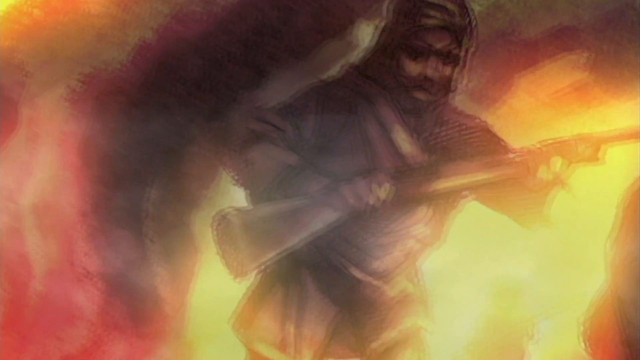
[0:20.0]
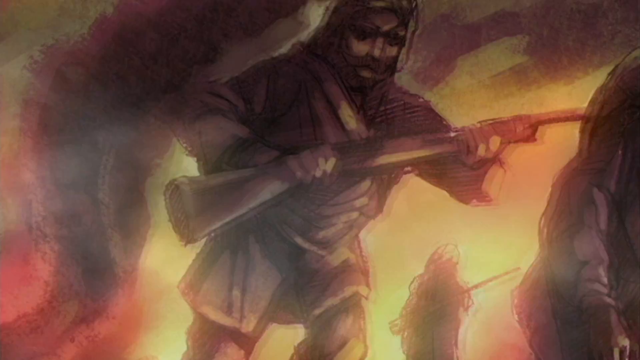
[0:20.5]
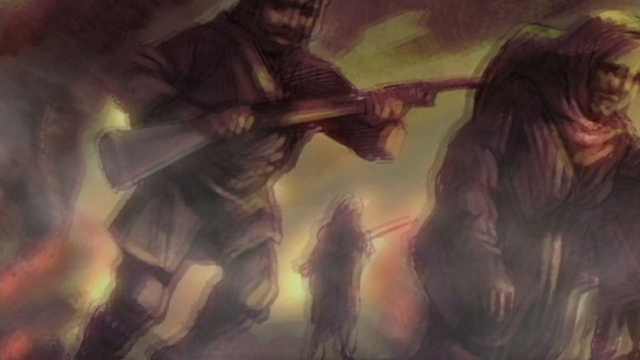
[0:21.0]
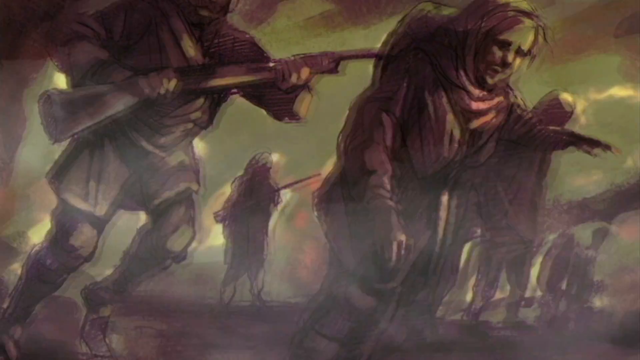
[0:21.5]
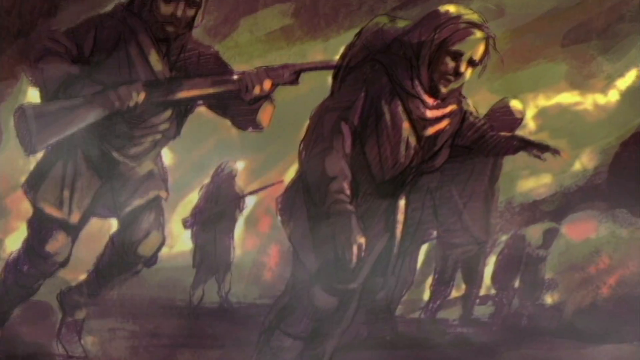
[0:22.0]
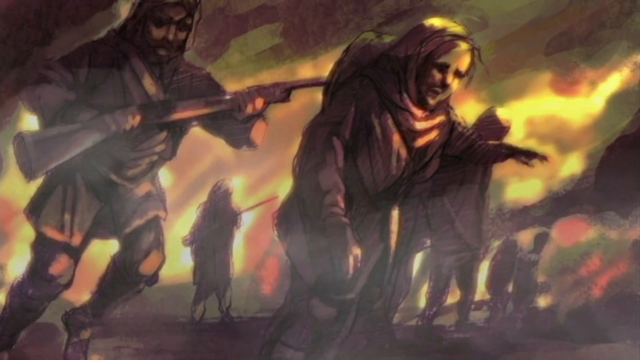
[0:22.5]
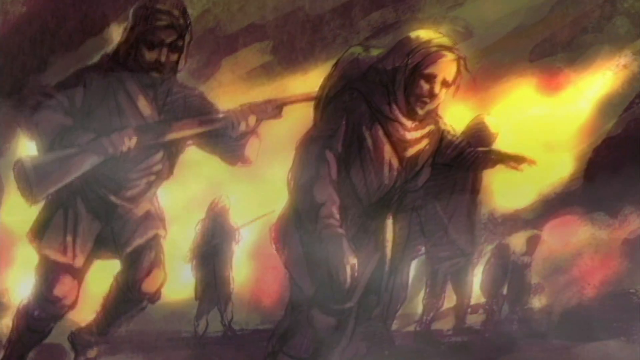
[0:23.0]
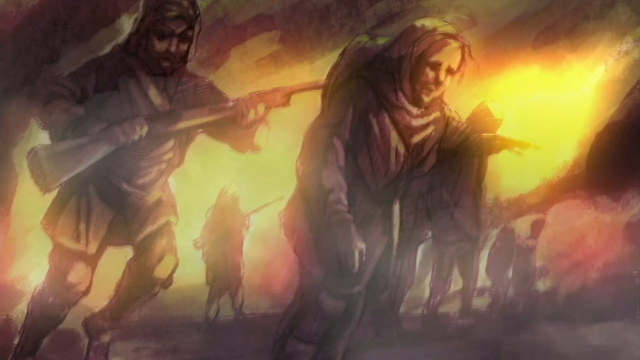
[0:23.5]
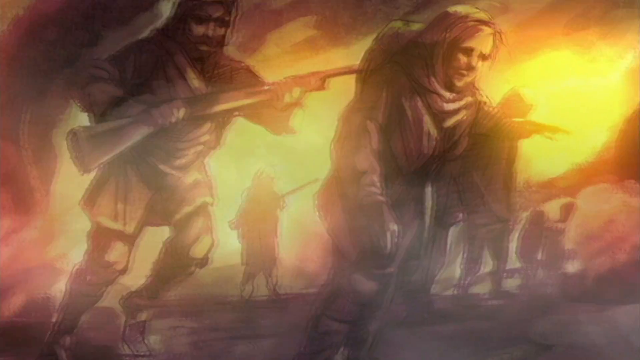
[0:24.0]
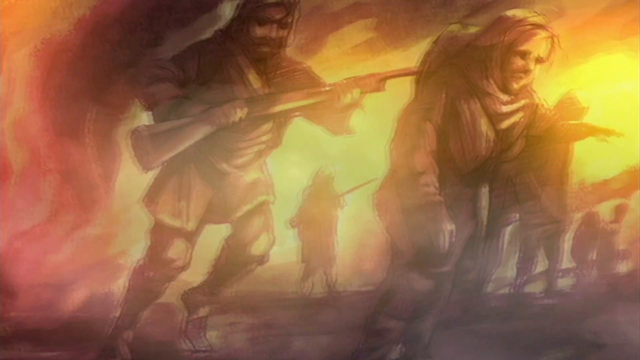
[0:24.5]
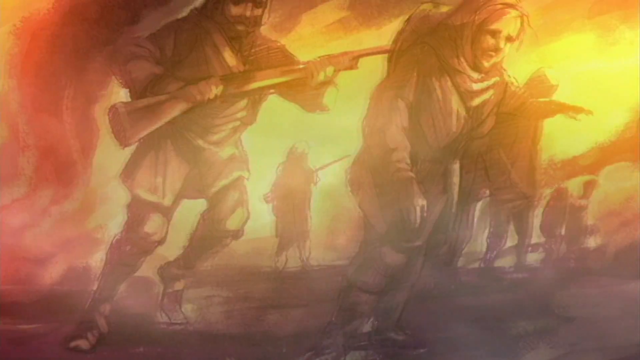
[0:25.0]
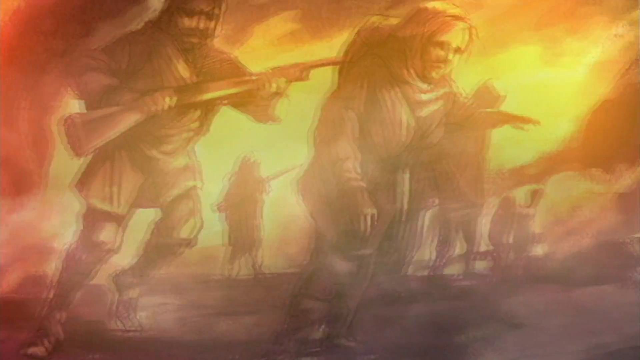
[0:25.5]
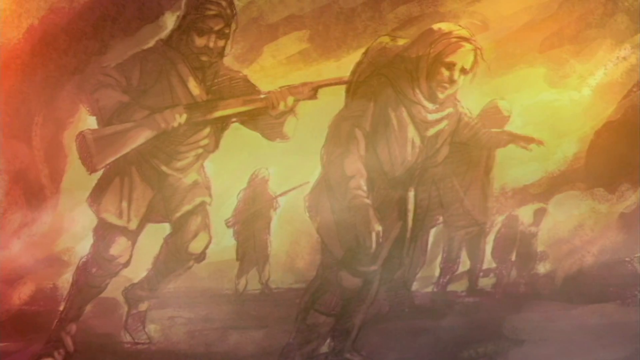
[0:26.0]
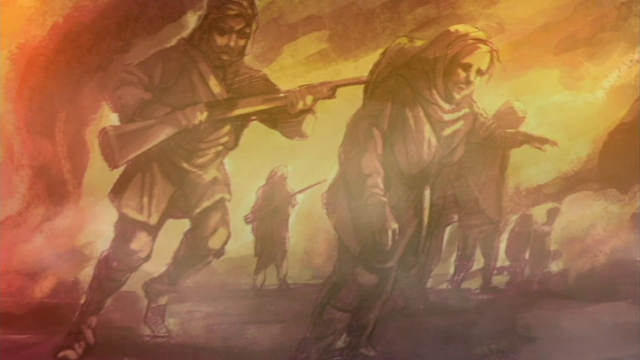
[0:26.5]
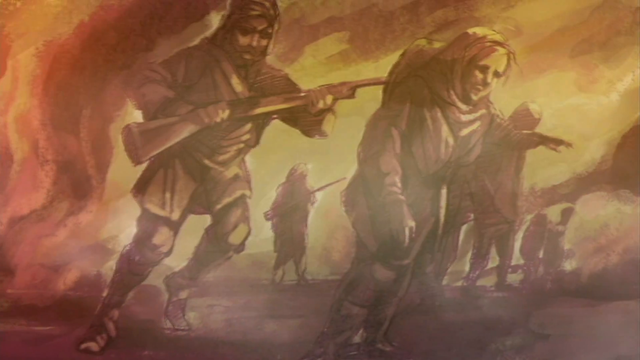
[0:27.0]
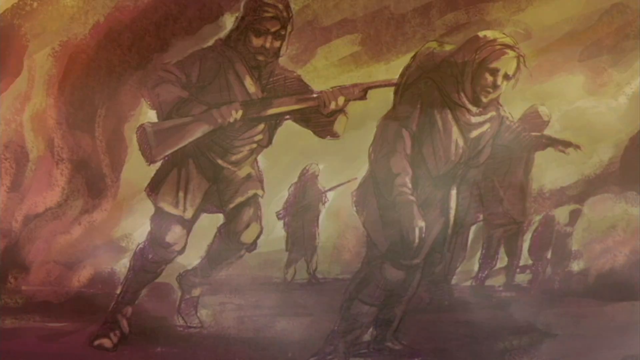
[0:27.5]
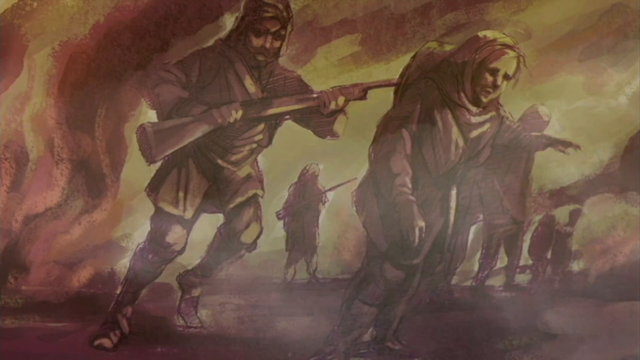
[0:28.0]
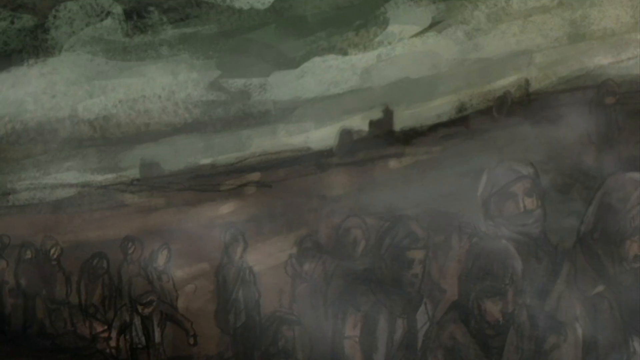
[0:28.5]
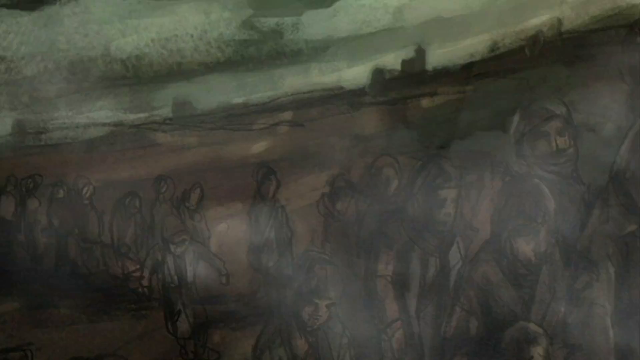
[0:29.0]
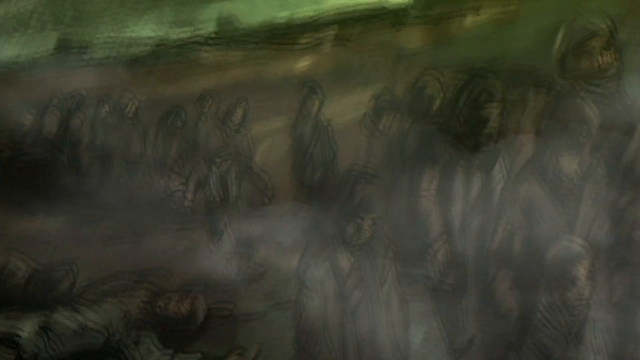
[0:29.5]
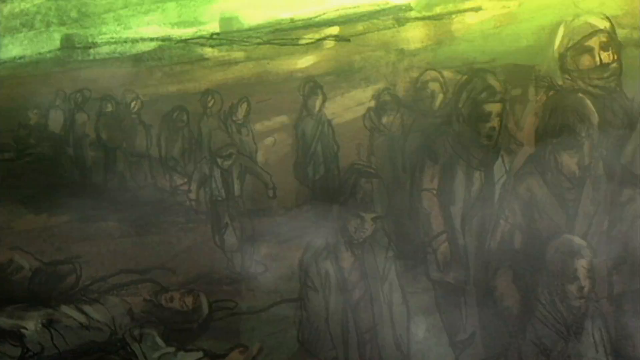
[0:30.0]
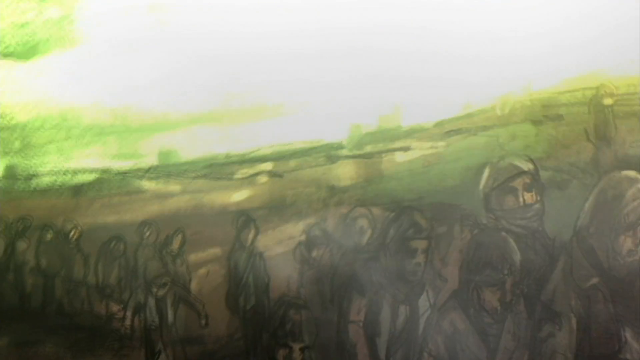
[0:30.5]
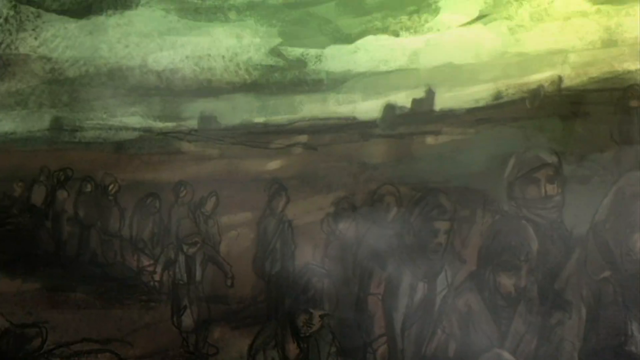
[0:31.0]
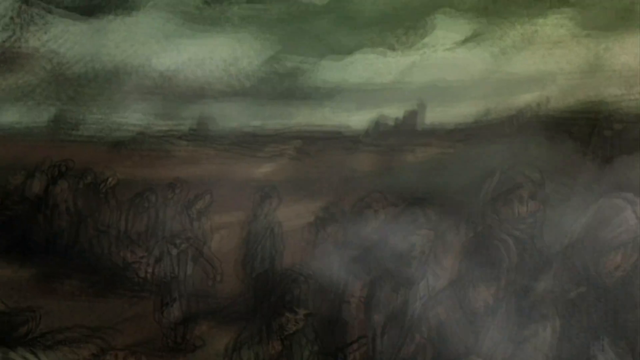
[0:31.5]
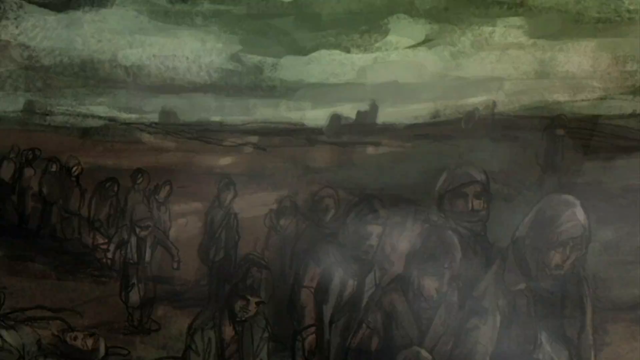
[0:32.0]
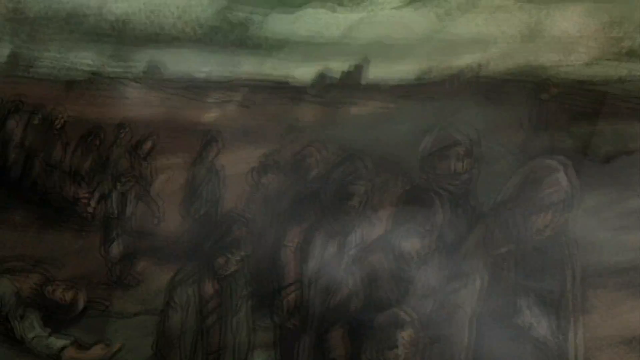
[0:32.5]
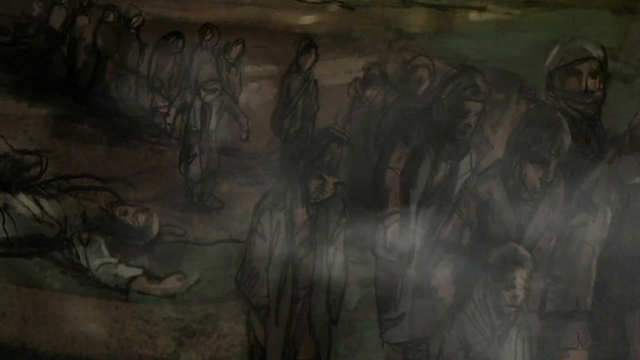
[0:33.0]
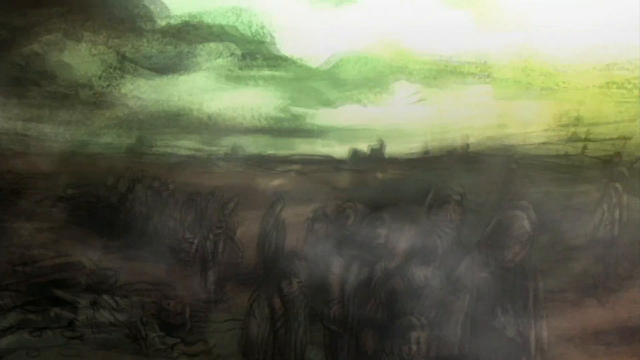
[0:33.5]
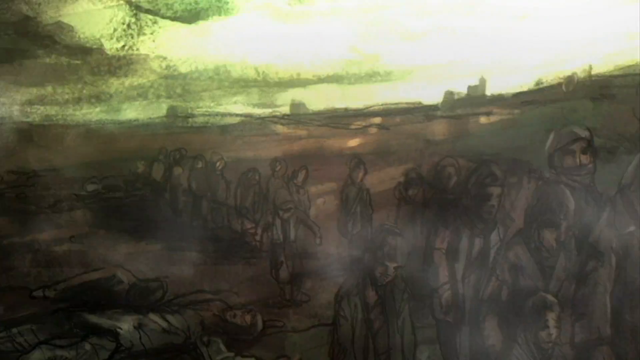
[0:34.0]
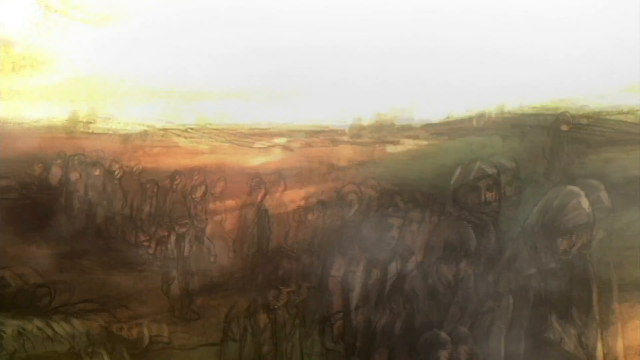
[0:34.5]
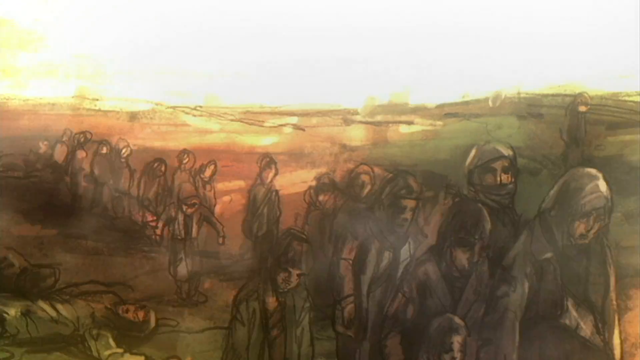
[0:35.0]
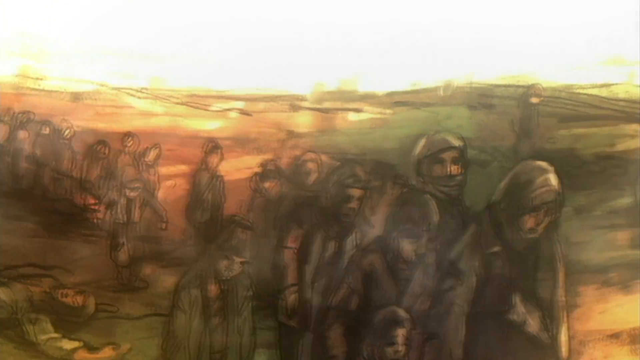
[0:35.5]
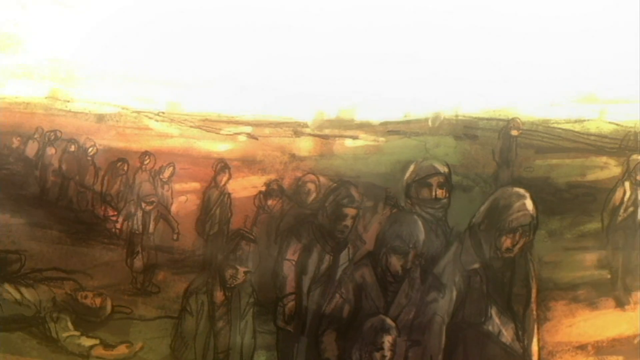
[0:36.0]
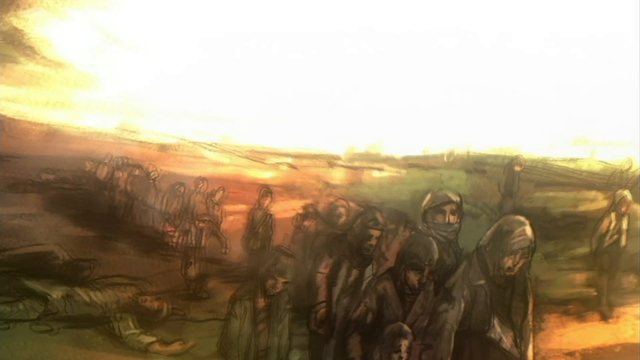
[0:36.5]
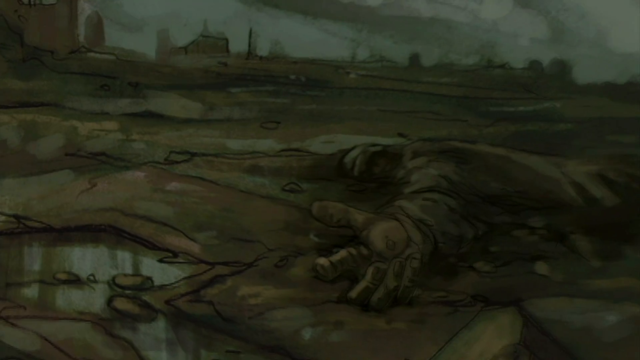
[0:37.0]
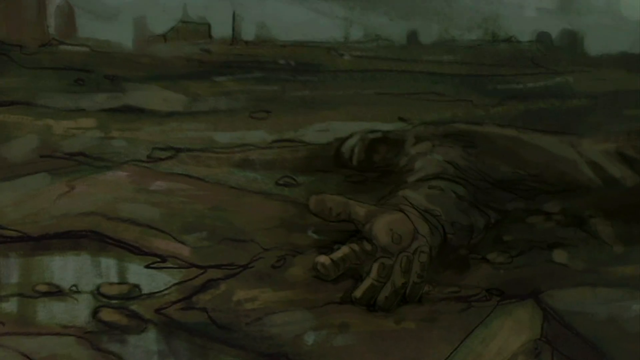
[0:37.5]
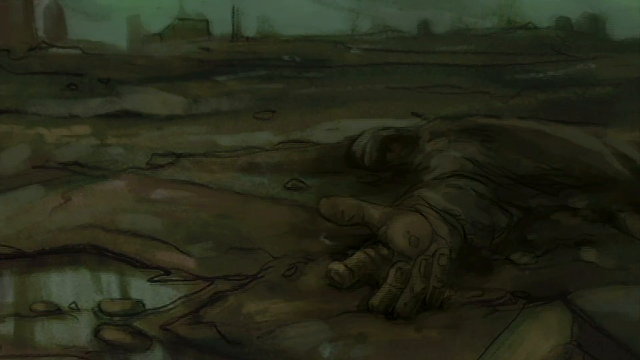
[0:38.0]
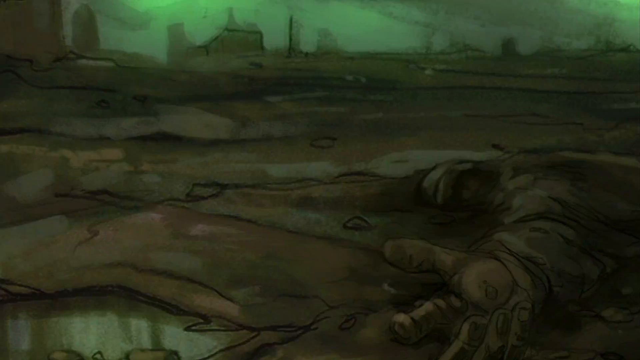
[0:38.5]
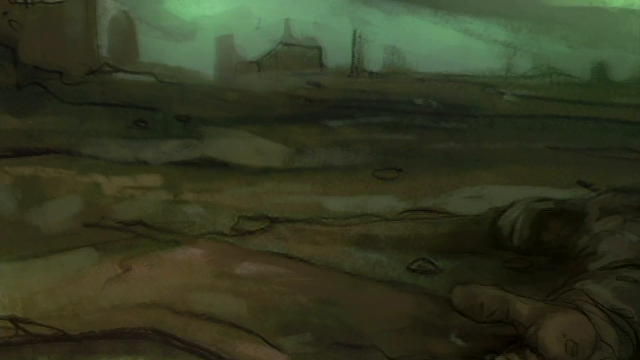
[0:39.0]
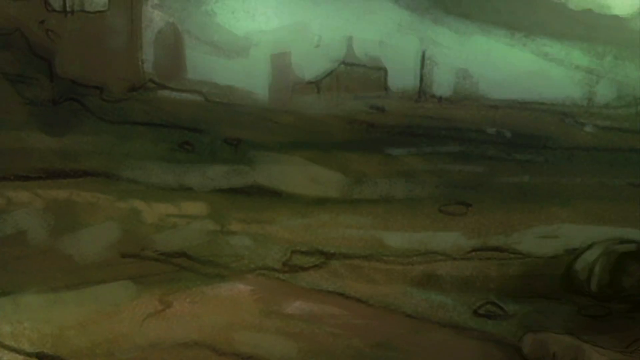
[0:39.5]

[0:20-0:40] The image returns to normal and bounces back out, with the man's head cut off at the top. It pans back over to where the older woman is visible, bouncing around, and levels out. The background, especially down the center and across the bottom, lights up bright yellow again, casting a yellow hue on the people, while down the left side it is orange and red mixed together. The picture bounces around to the left and right, giving an eerie, spooky feeling. Then it cuts to an almost tealish sky with black markings in it. The view comes down a very crudely drawn brown hillside to a bunch of people marching from deep on the left, just down from the corner, with their outlines visible about halfway across. On the right side a couple of small children are more visible, along with a really tall person whose head goes off the top and a couple of shorter people. Down to the left, some people are lying. Then a close-up shows some land, a little water in the bottom left, and a person lying on the ground; it is very crudely drawn and hard to make out, but a hand is visible stretching out toward the bottom. Then the view zooms over to the left.